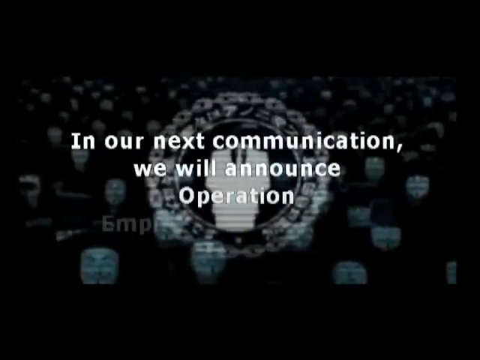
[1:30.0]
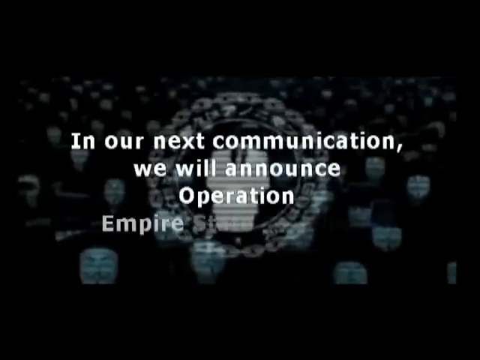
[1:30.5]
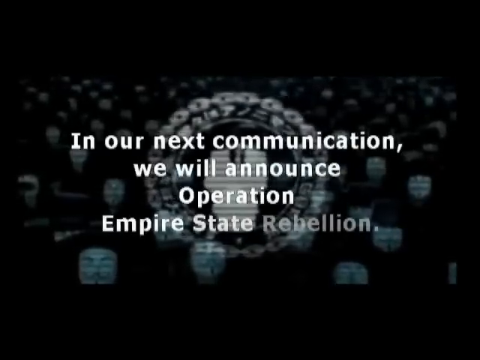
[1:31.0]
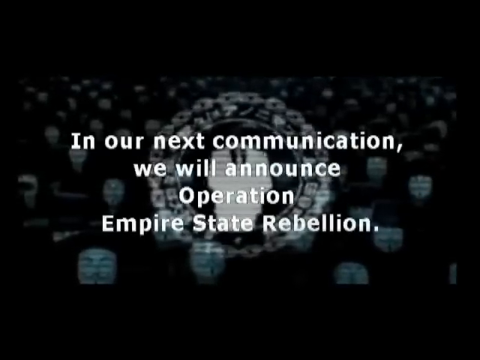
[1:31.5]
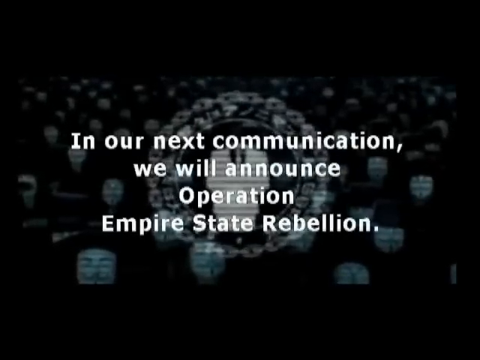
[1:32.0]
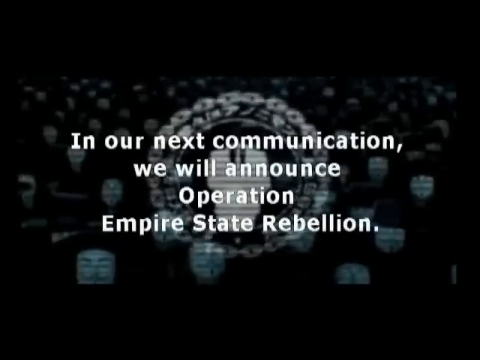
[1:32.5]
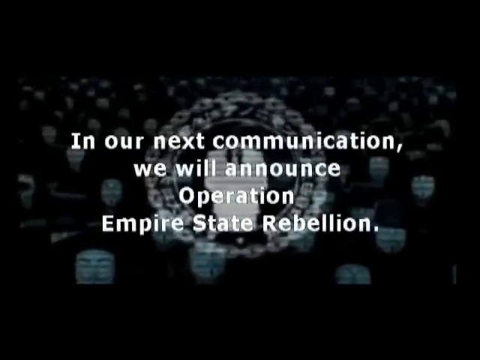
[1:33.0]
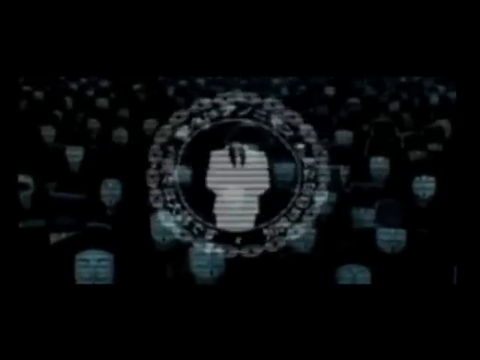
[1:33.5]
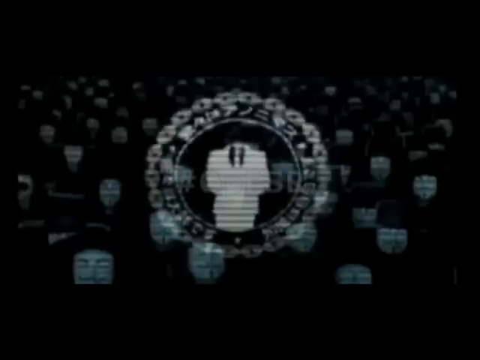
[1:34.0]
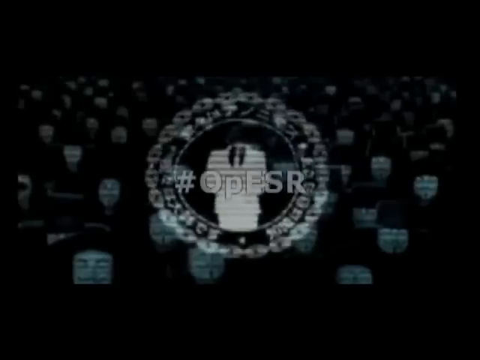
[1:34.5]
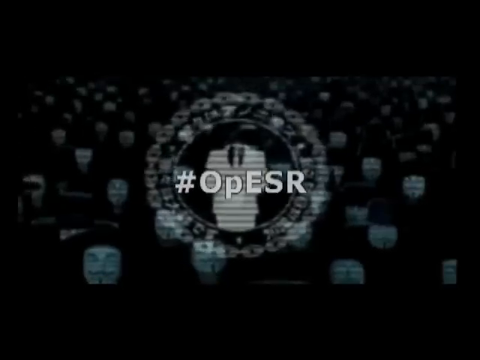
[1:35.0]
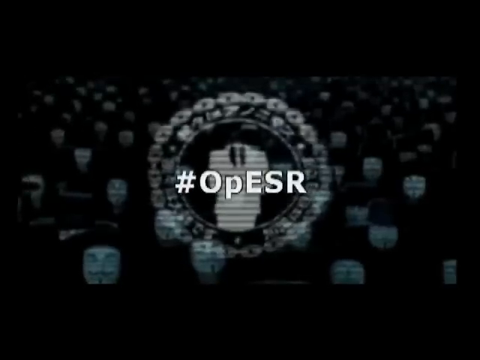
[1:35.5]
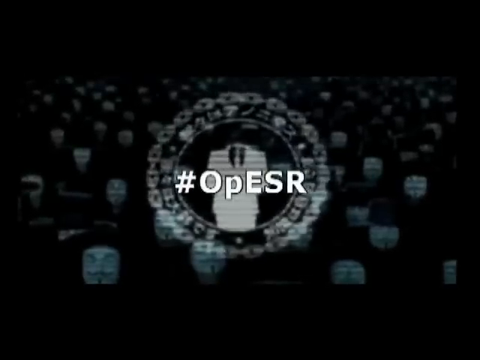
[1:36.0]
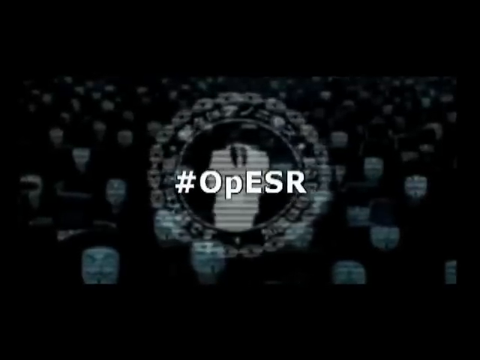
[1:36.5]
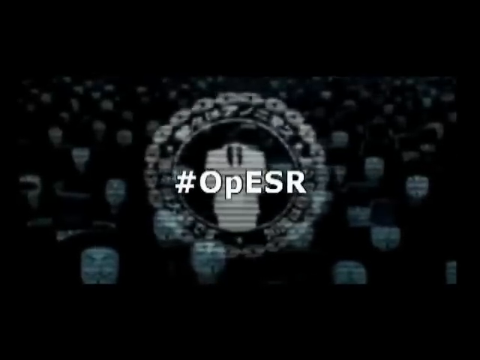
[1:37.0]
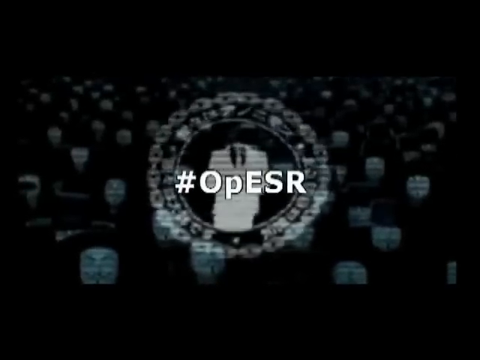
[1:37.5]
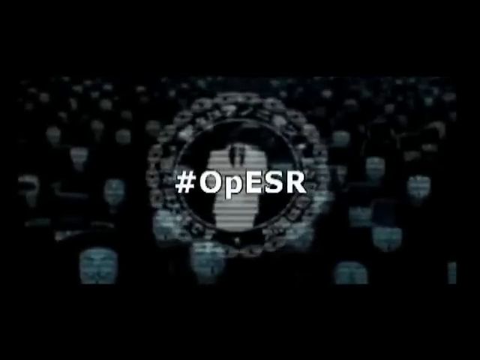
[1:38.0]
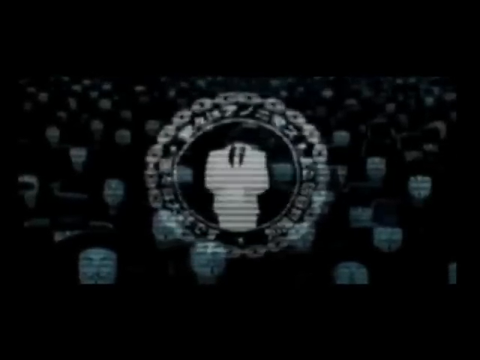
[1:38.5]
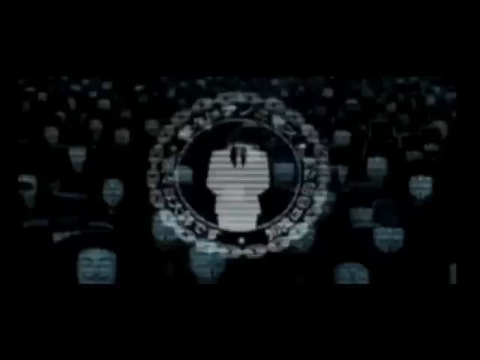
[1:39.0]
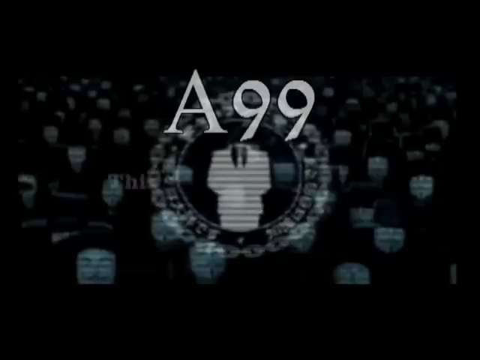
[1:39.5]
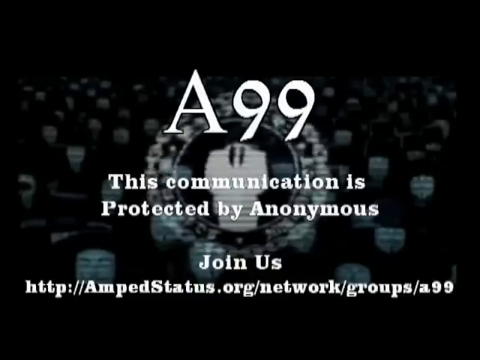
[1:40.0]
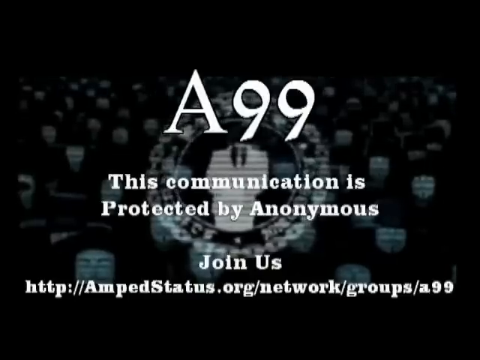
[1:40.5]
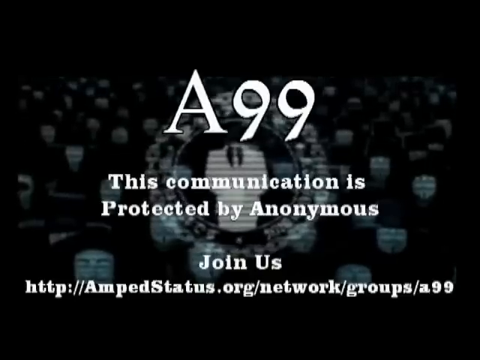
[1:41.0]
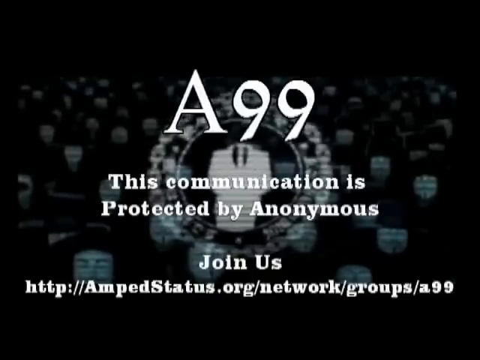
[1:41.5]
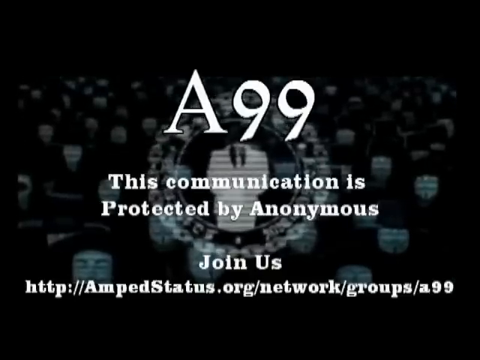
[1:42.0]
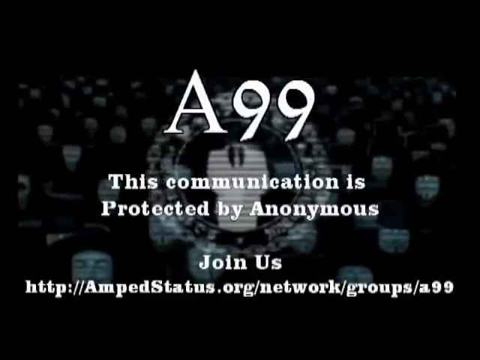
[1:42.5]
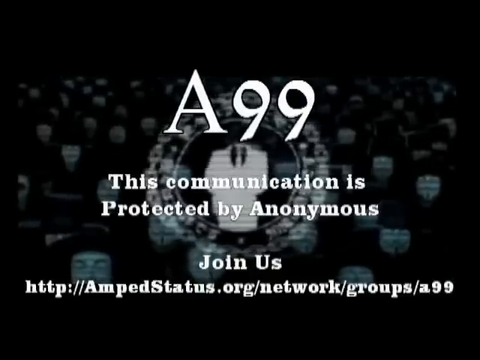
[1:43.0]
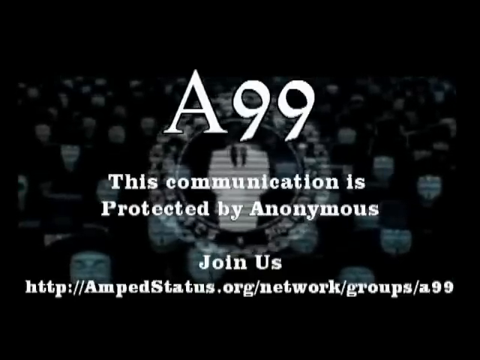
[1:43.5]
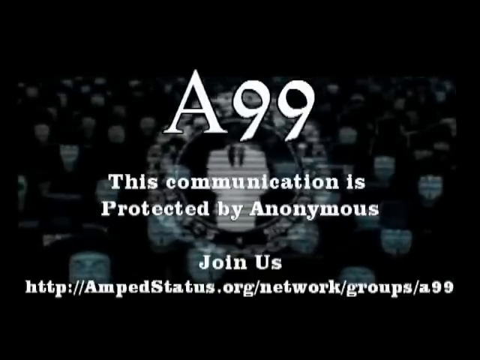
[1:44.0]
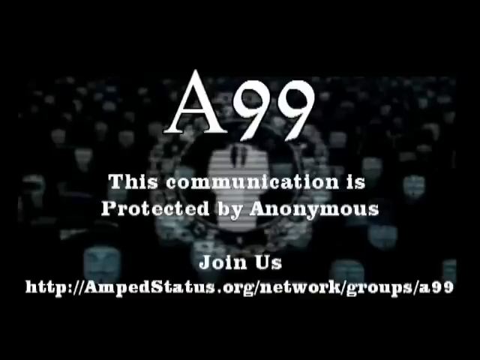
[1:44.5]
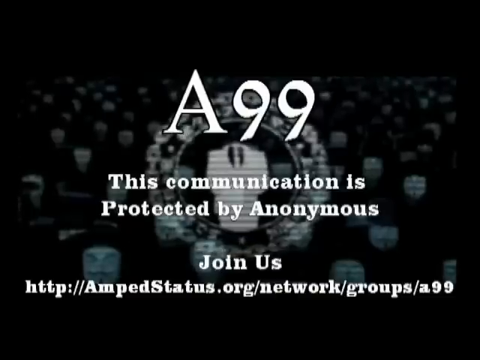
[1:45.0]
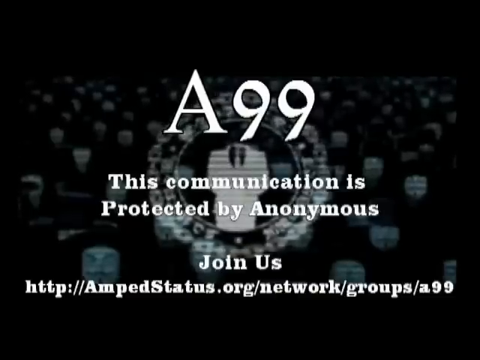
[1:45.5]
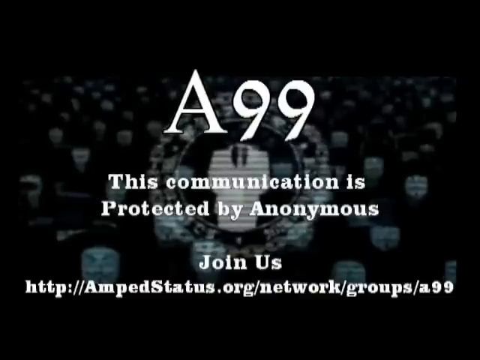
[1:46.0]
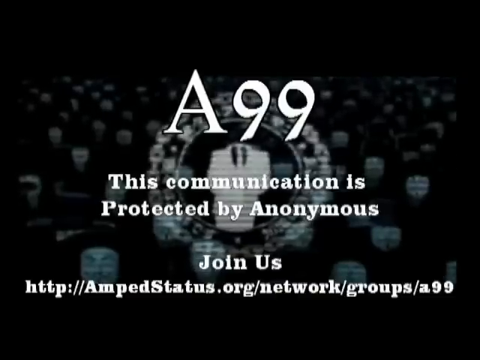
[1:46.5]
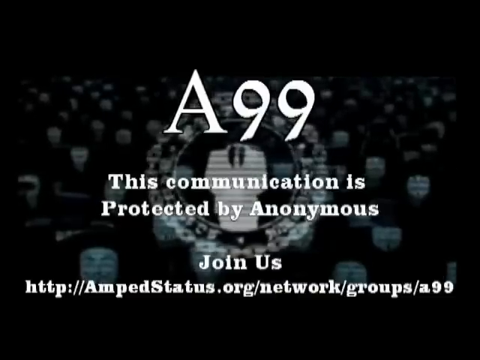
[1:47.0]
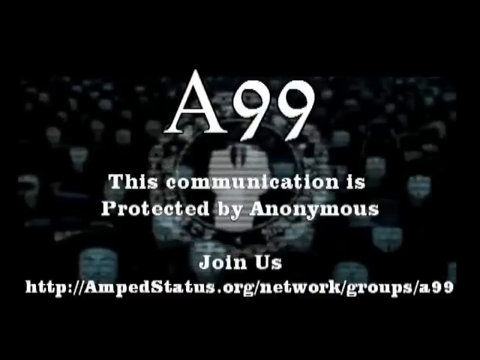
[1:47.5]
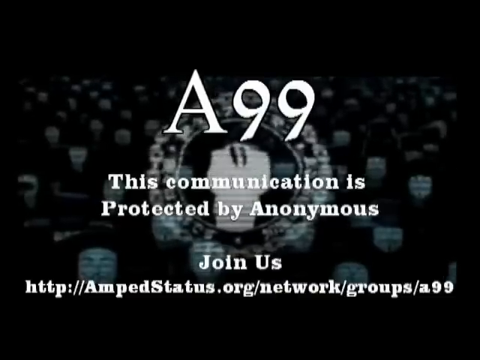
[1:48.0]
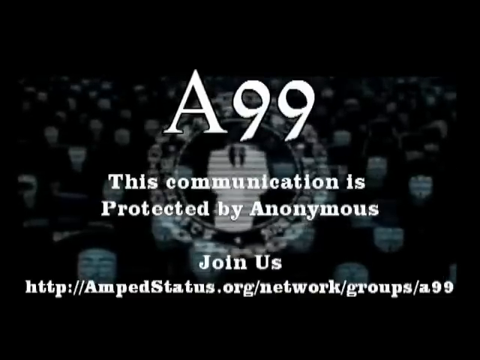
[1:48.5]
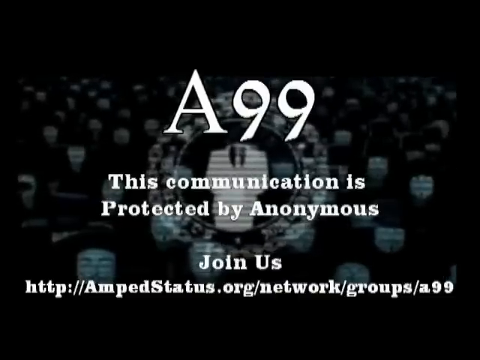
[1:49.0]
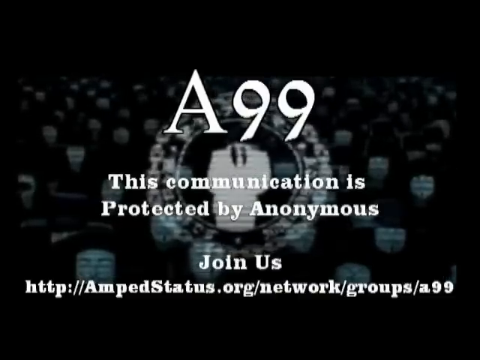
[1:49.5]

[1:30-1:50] A black background shows many figures wearing white masks and the circular logo with something inside it that looks like a person wearing a white suit; the logo seems to be slightly flashing. In front, white text slowly appears, reading: "In our next communication we will announce Operation Empire State Rebellion". After a while this text disappears and a caption appears in its place: a hashtag followed by the letters O, P, E, S, R, with E, S and R in uppercase. After that, a big caption "A99" in a different font appears at the top of the screen, and below it text reads "This communication is protected by Anonymous". At the bottom of the screen is a website address labeled "Join us", starting with "ampedstation.org". The video seems to be slightly glitching because of the flashing logo in the background.